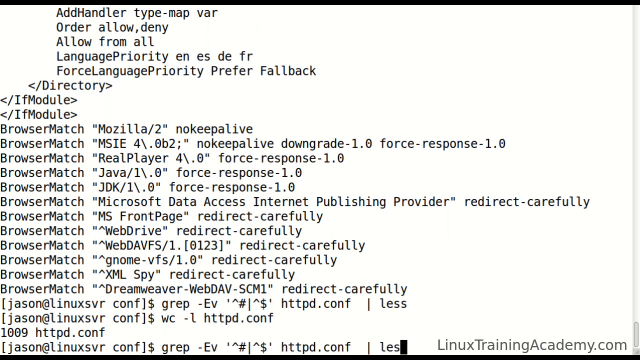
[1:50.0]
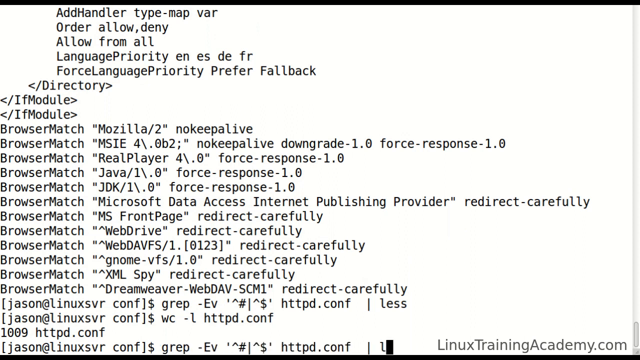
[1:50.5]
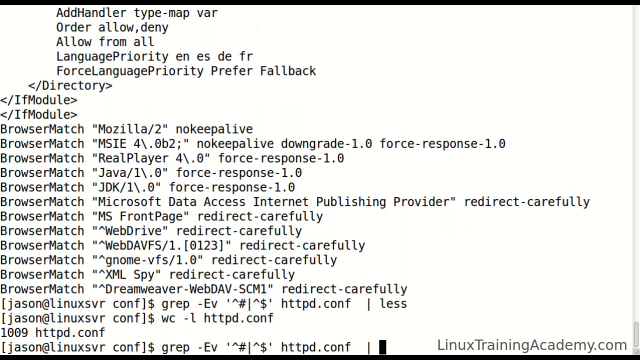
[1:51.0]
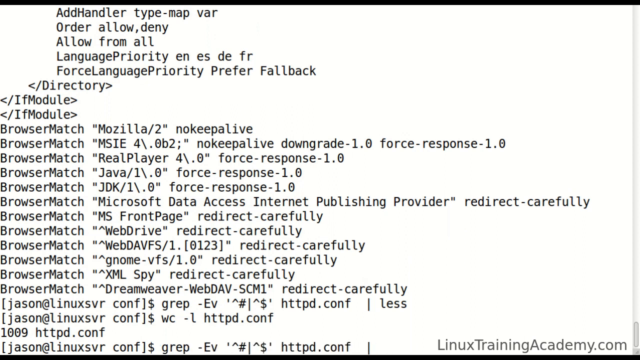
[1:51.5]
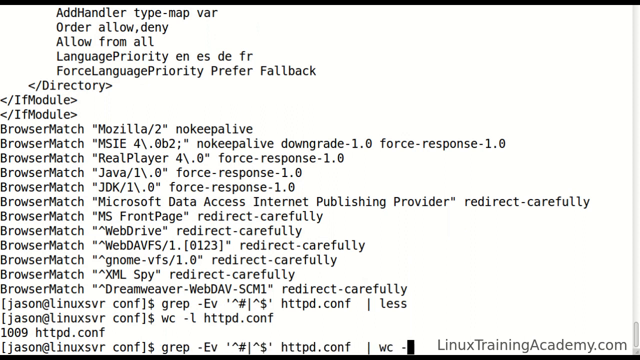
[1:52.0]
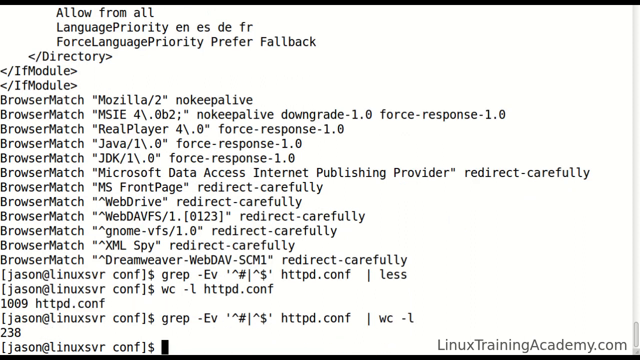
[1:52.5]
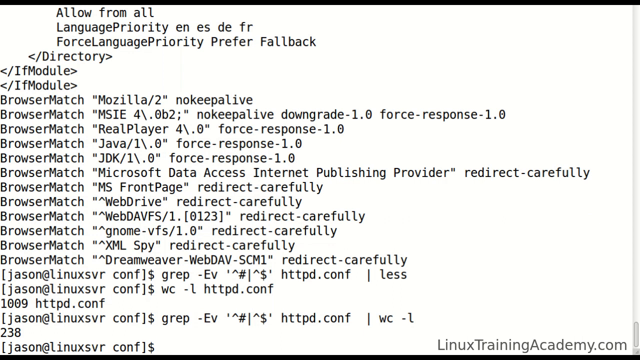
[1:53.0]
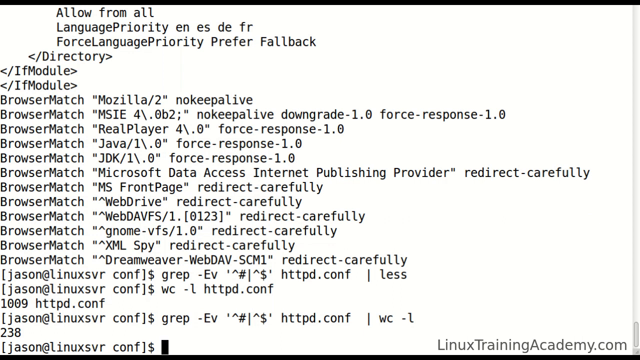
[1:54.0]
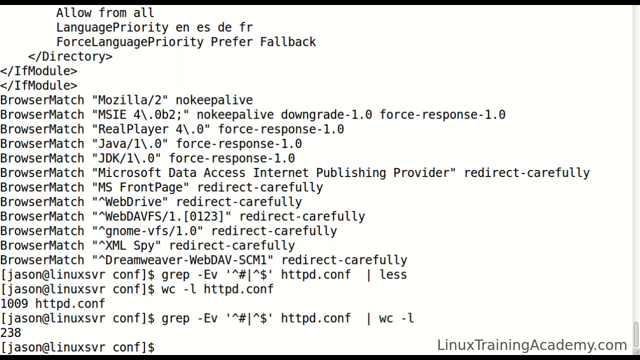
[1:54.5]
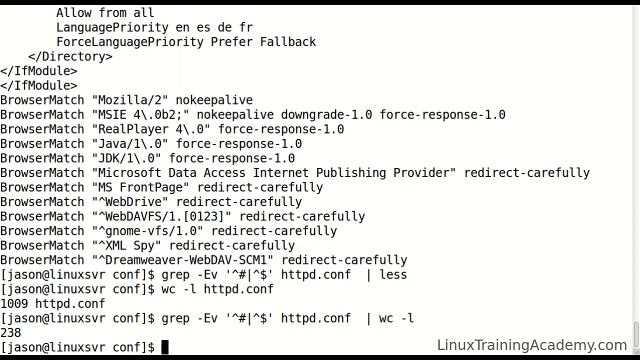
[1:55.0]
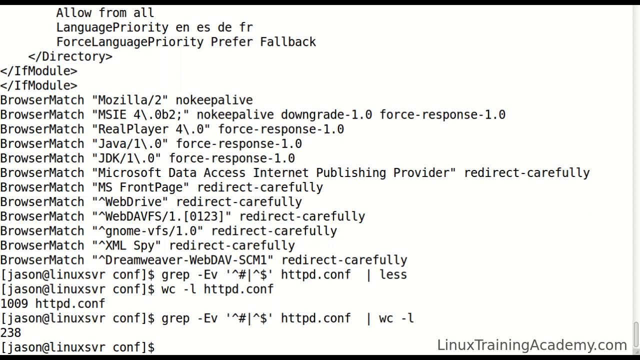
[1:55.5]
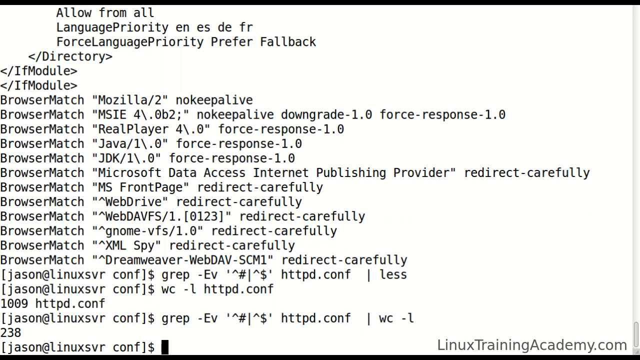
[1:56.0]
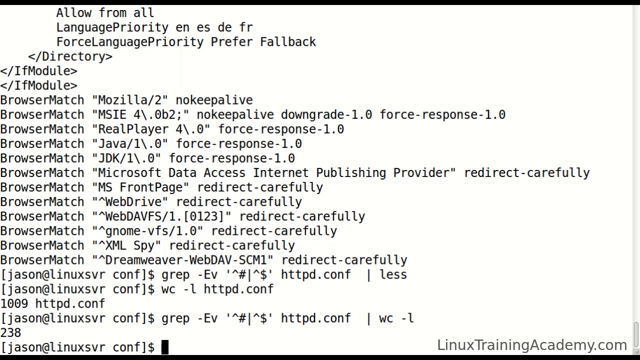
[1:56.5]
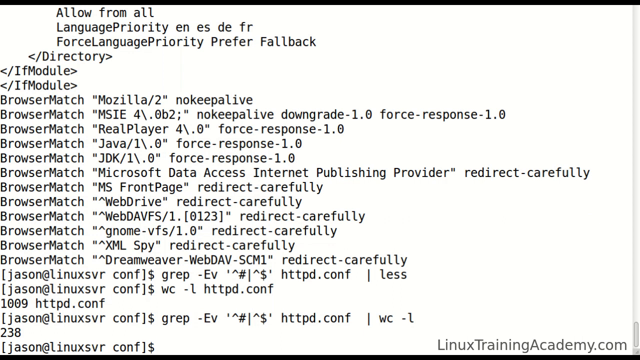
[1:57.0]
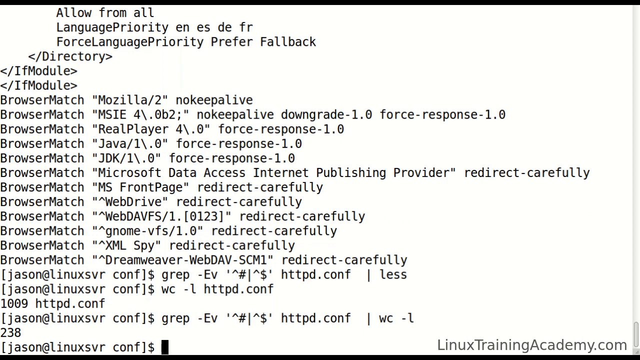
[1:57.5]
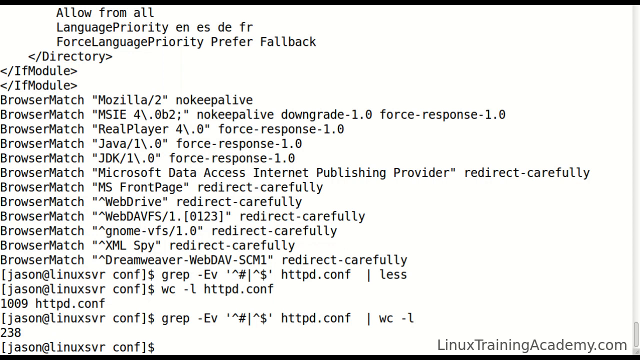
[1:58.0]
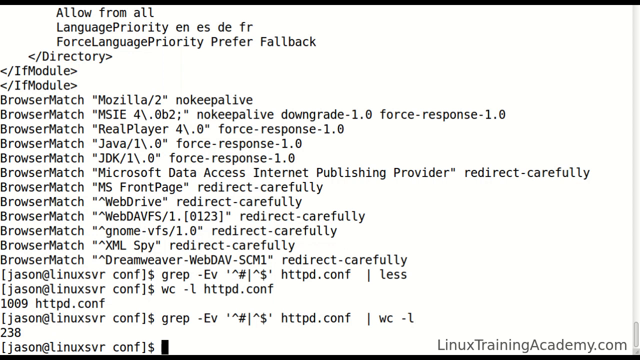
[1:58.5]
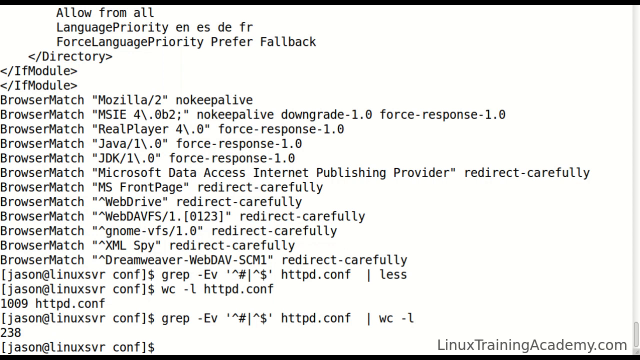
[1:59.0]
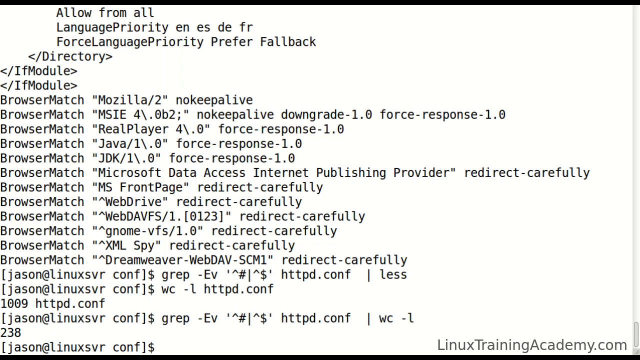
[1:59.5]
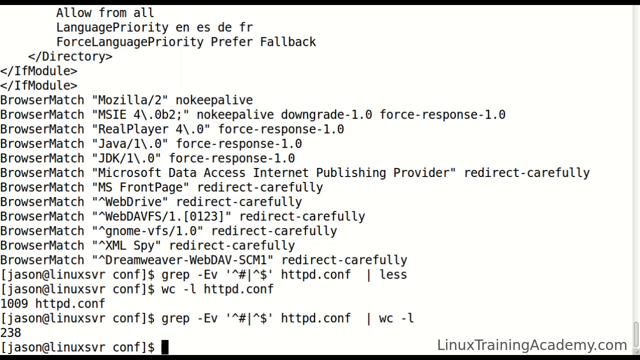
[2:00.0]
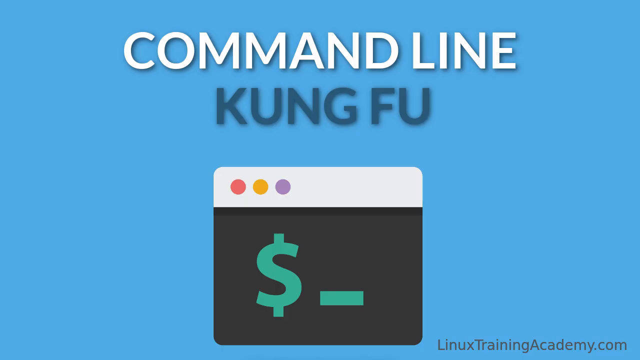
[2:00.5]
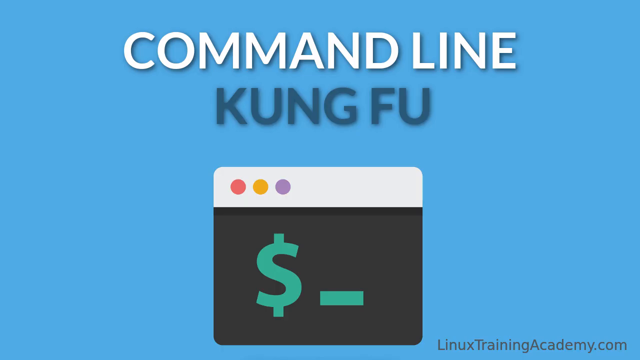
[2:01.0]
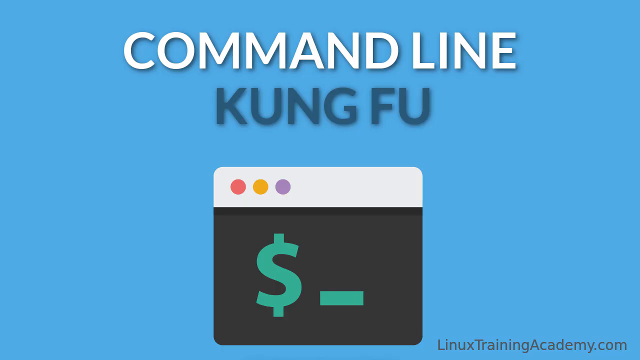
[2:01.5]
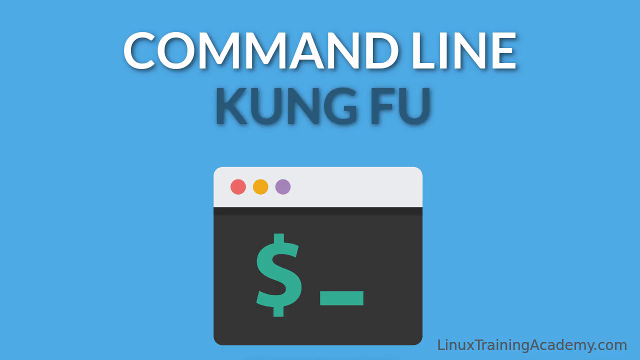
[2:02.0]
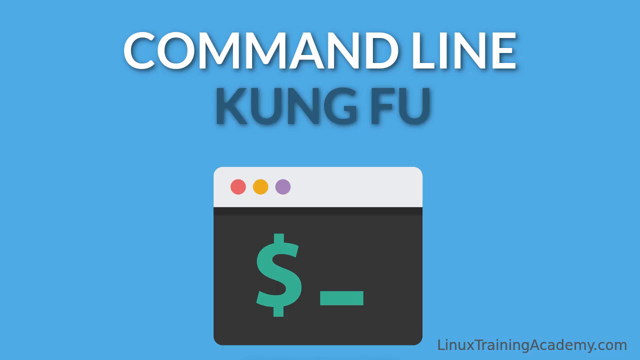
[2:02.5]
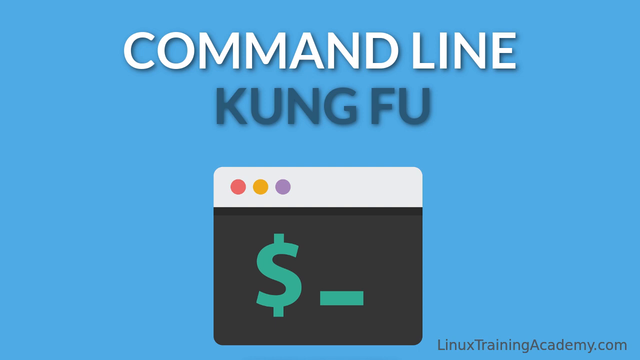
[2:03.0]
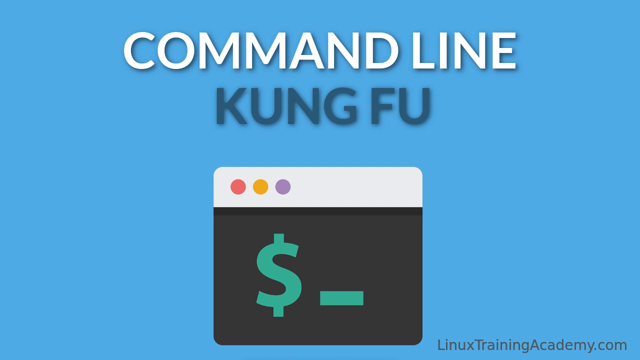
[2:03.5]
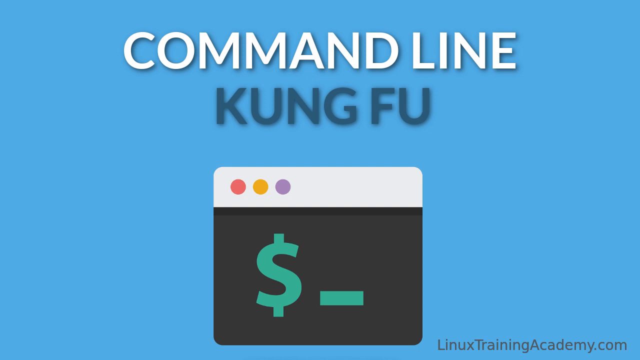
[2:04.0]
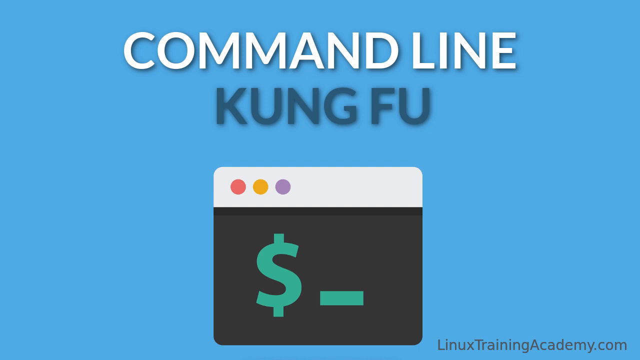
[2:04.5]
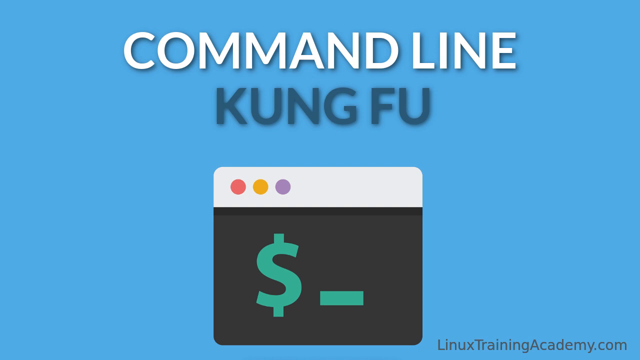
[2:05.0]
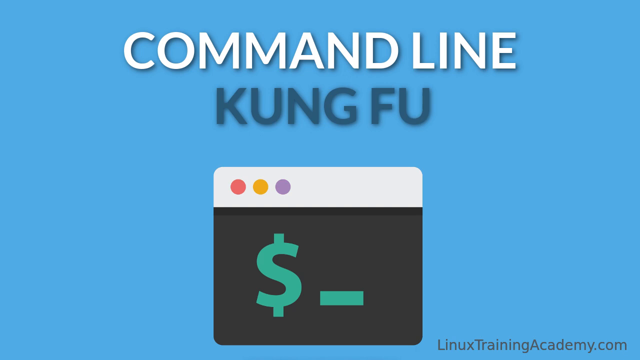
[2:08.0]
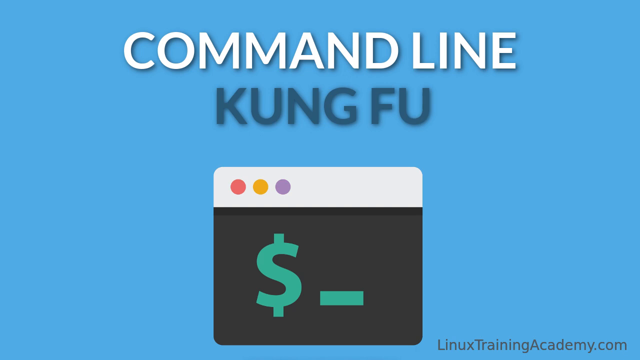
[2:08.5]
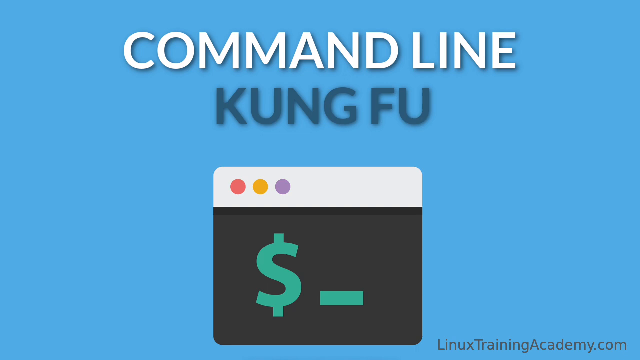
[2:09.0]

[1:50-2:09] A screen recording shows a text file open containing file paths and directories, with a watermark in the bottom right-hand corner that says "linux-training-academy.com". A cursor flashes and moves across the bottom line as text is input. The video then shows an outro screen with a blue background and white title text that says "command line", with "kung fu" below it in a blue-grey colour. Below is an icon image that looks like a web browser, with three vertical dots, one red, one yellow and one purple, and inside the browser window is a dollar sign and an underscore in green text. The screen is held for about 10 seconds.